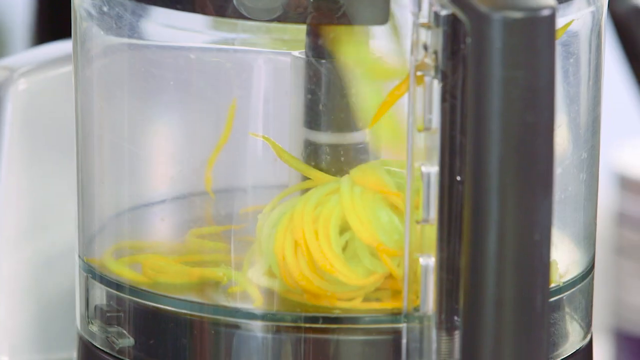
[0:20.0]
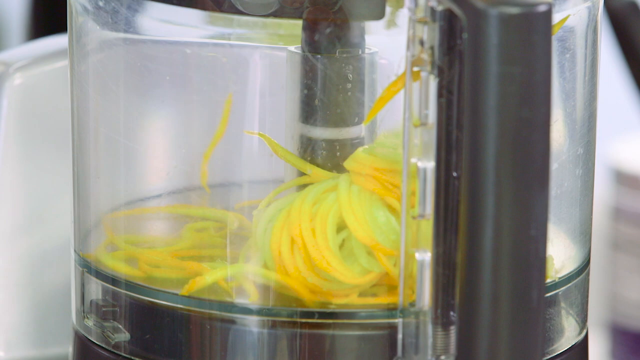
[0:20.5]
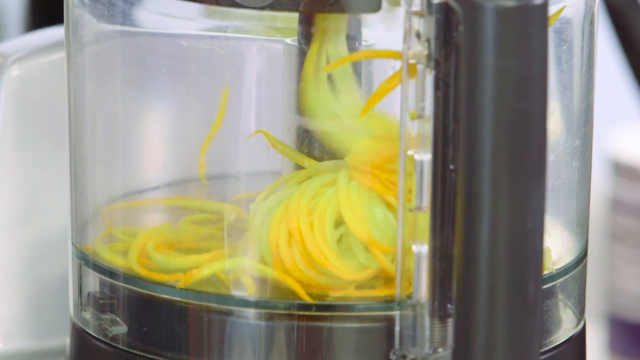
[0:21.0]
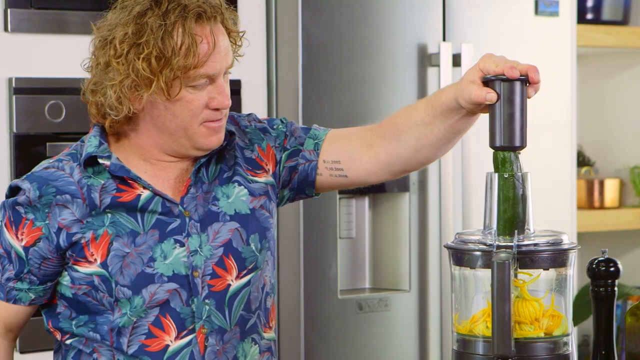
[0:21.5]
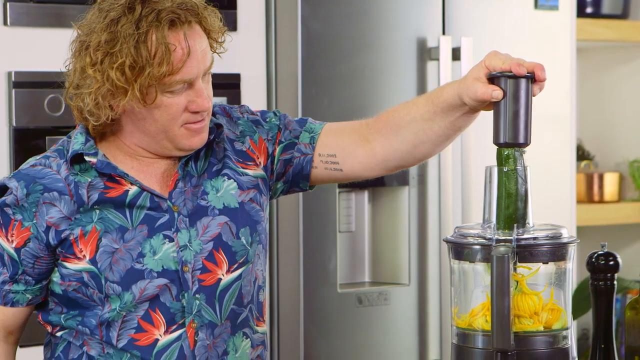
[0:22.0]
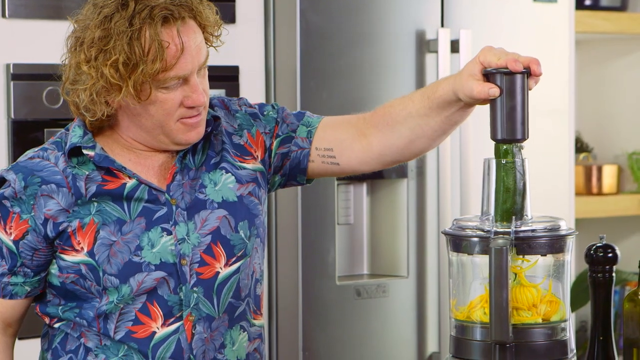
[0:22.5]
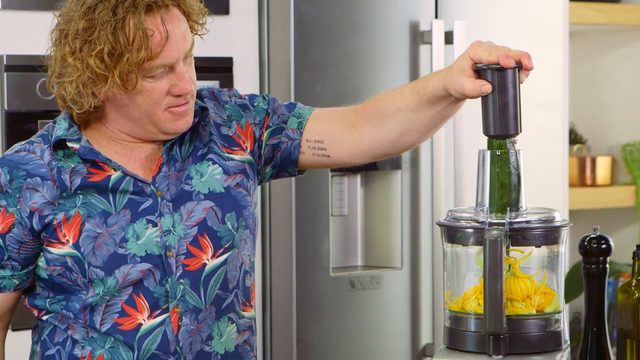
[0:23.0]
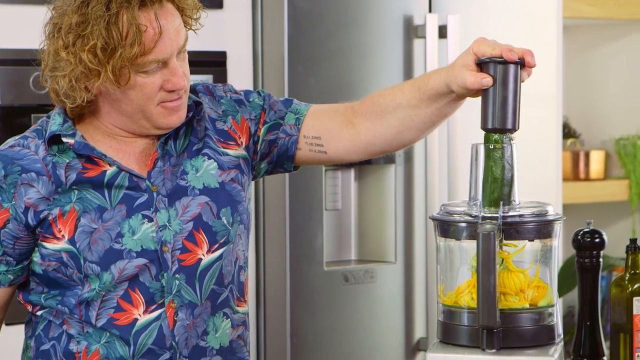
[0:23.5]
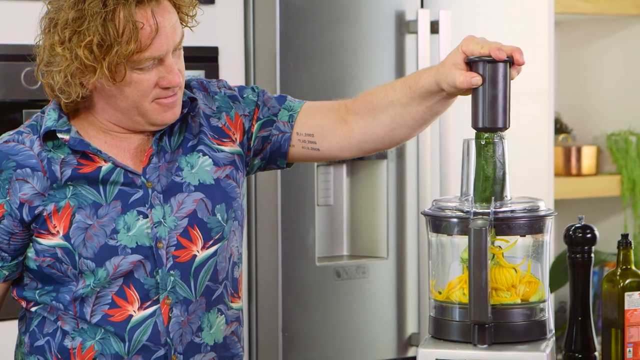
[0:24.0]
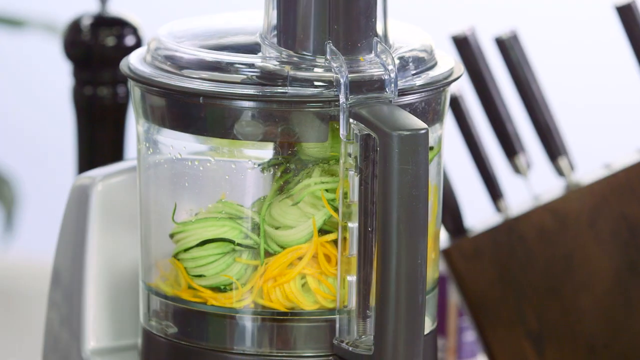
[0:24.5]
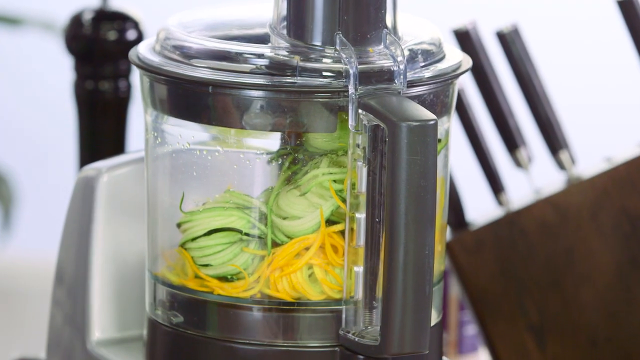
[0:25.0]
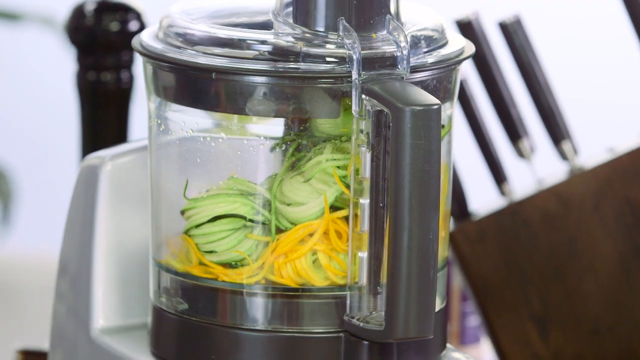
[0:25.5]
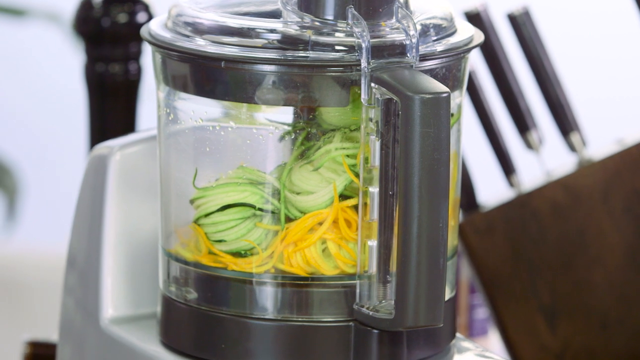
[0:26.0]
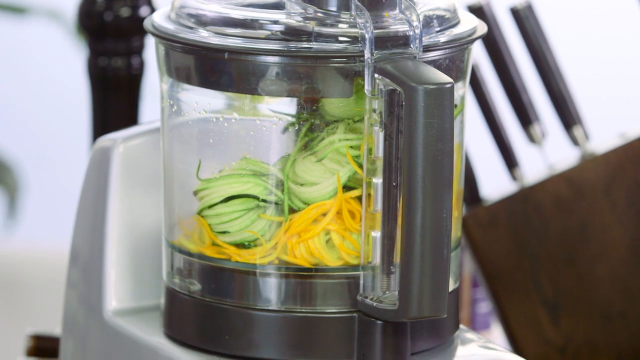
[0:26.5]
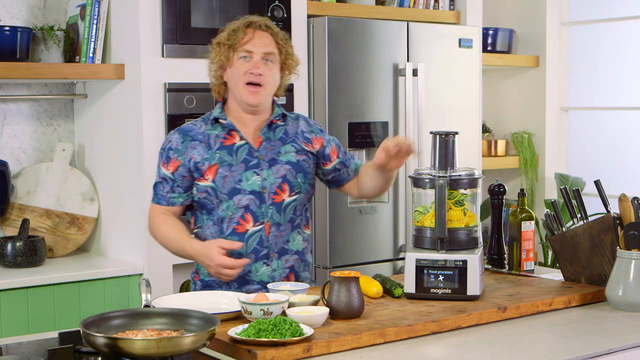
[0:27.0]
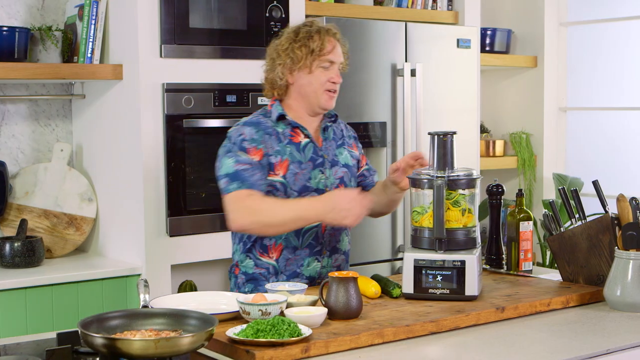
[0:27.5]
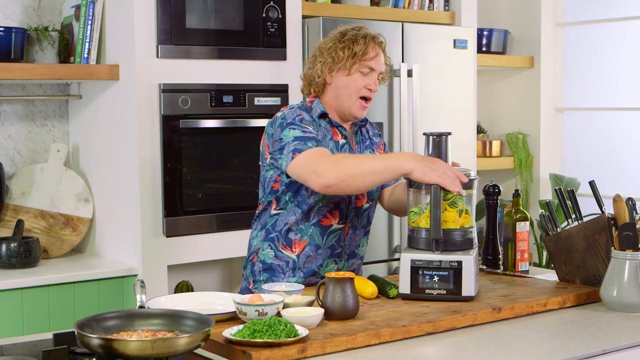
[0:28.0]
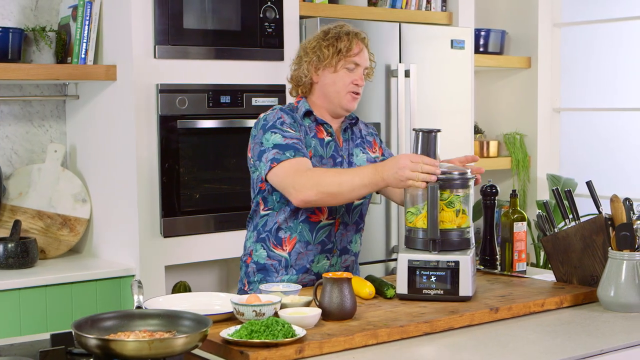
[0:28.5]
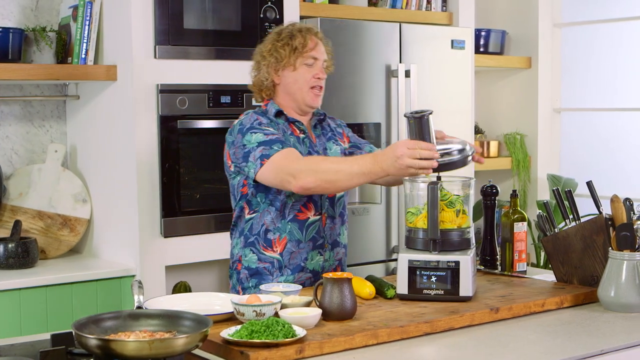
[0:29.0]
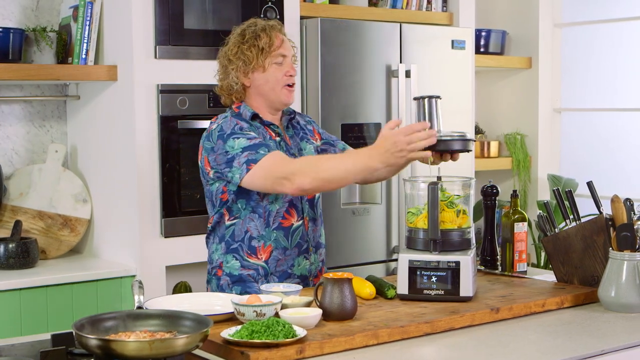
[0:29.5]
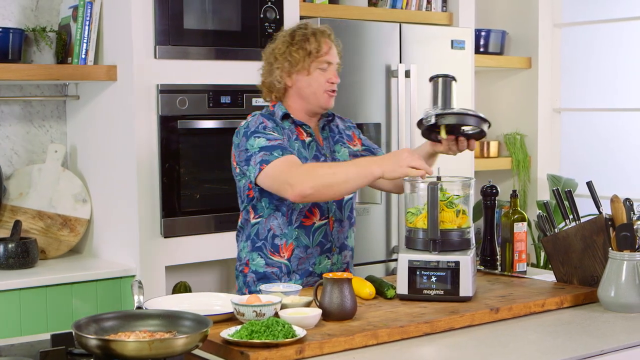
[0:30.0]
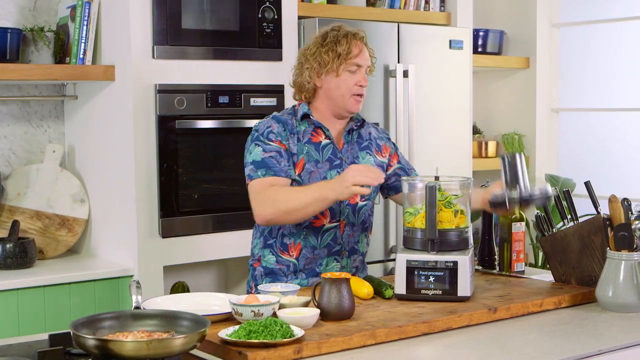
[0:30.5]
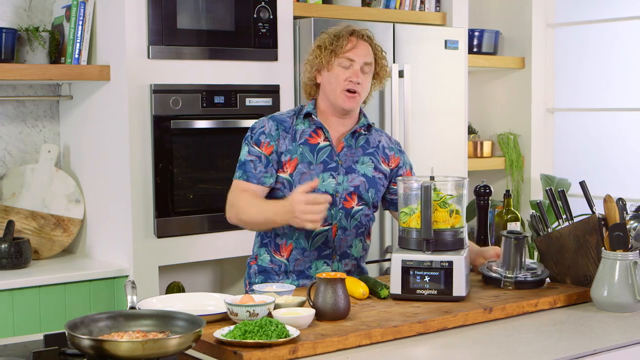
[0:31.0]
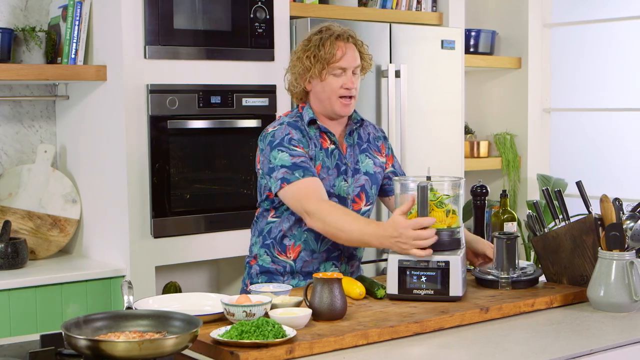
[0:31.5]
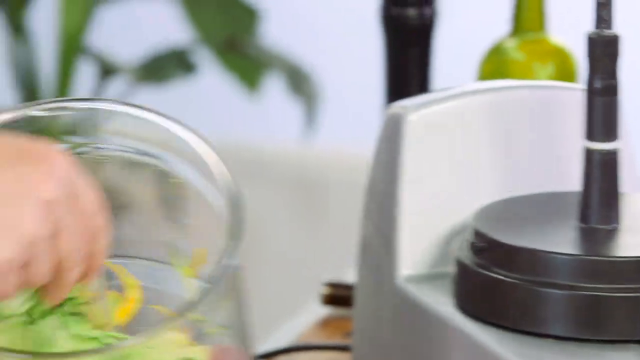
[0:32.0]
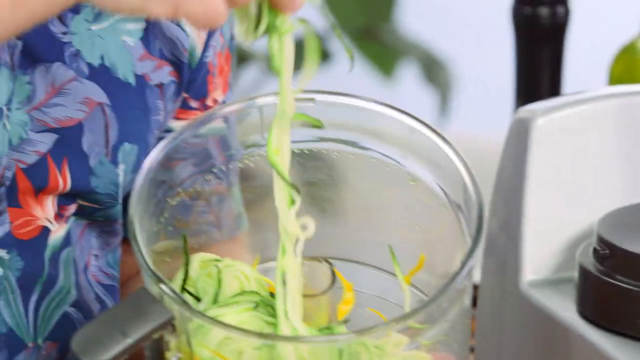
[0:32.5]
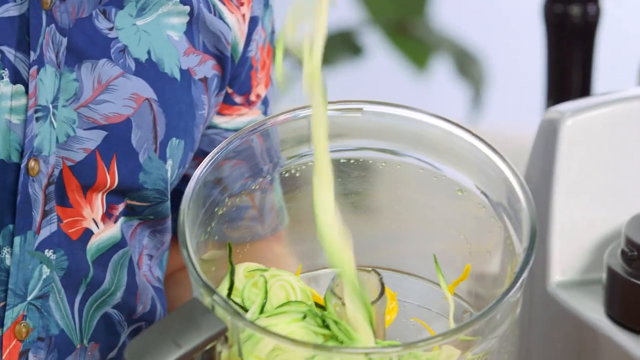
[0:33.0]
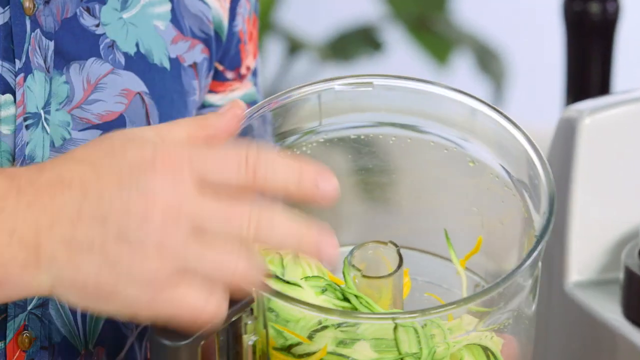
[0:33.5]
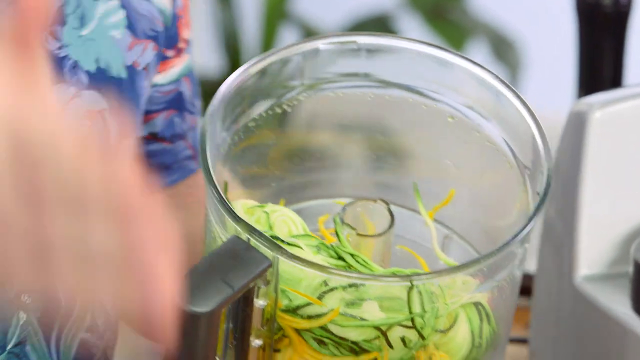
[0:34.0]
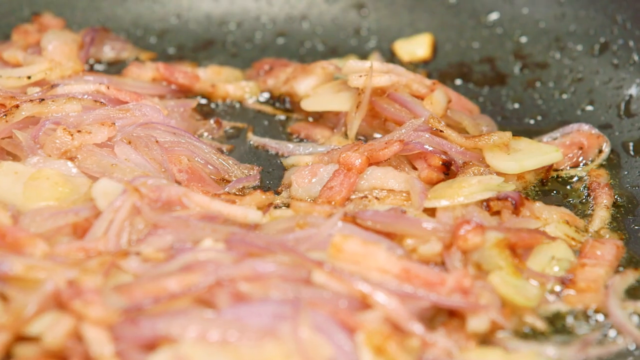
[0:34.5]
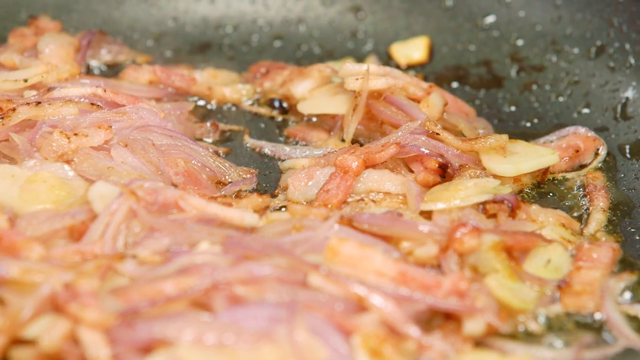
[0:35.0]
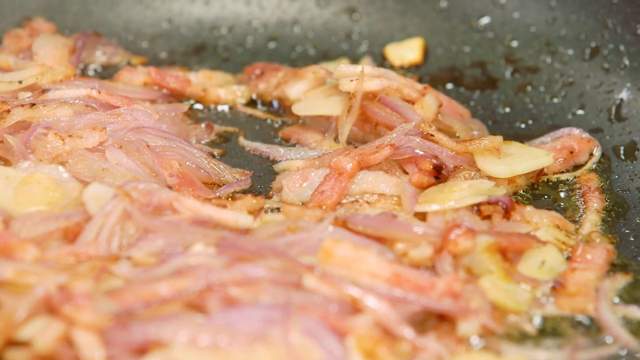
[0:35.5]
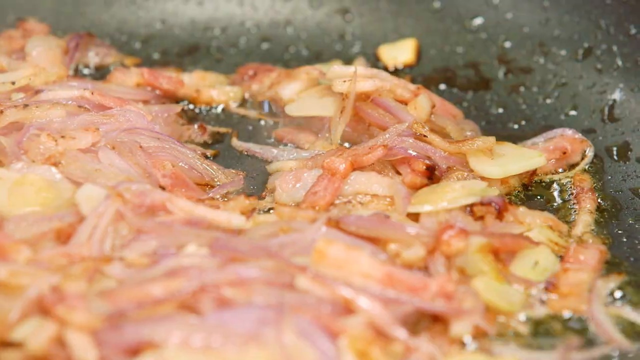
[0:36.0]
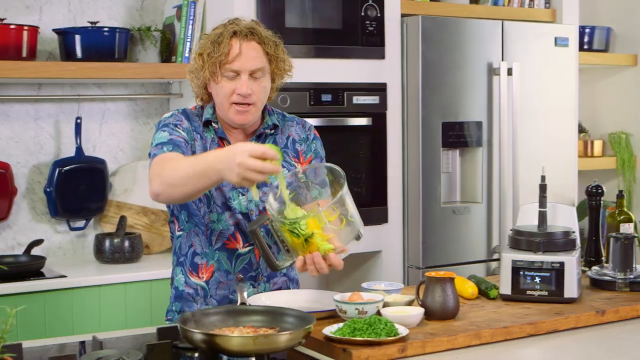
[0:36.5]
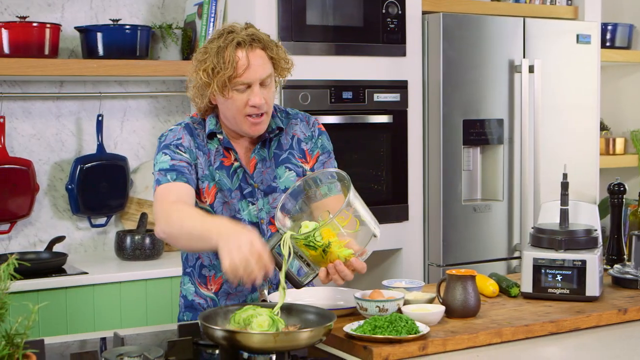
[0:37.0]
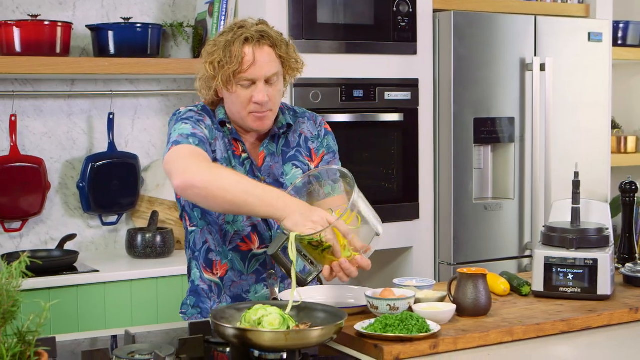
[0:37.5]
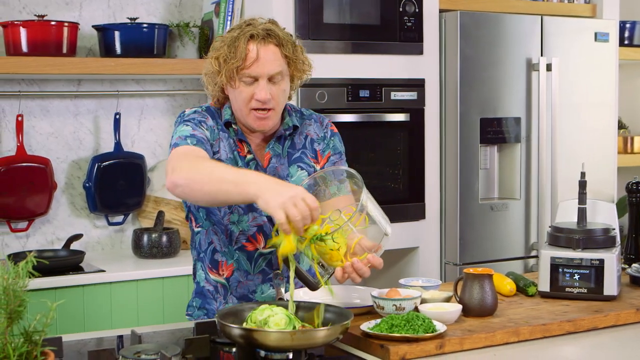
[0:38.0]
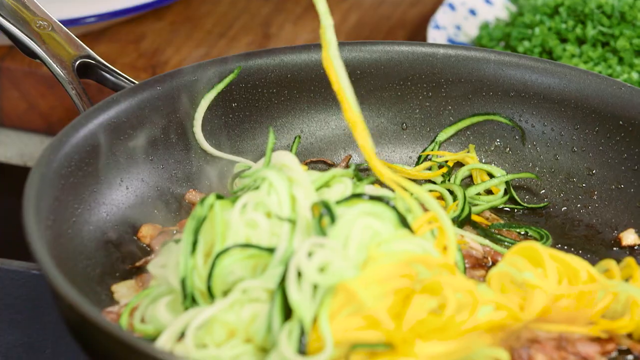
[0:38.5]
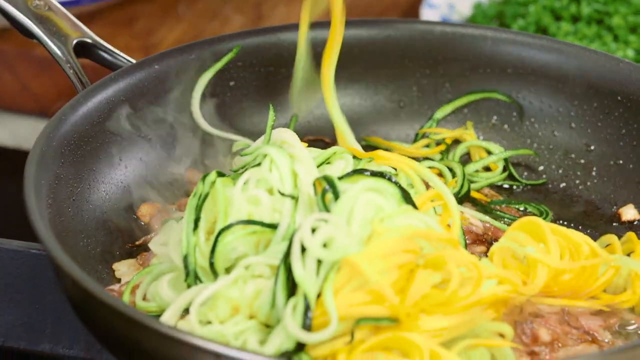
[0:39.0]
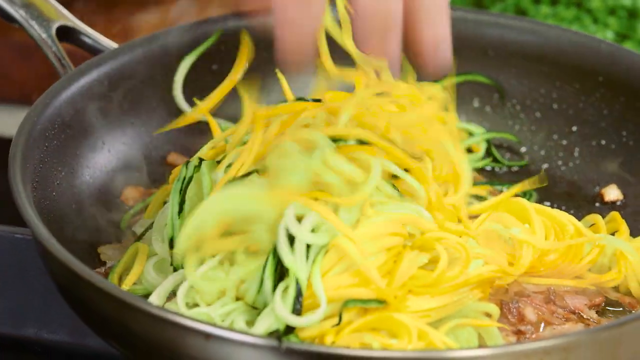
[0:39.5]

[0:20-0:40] The chef grinds vegetables with the vegetable grinder, a machine that looks like a blender: a round, transparent plastic or glass container with a lid, set on a square base. The lid has an opening that looks like a chimney. The chef puts in a yellow zucchini and a green baby marrow, and the machine cuts them into very thin slices.